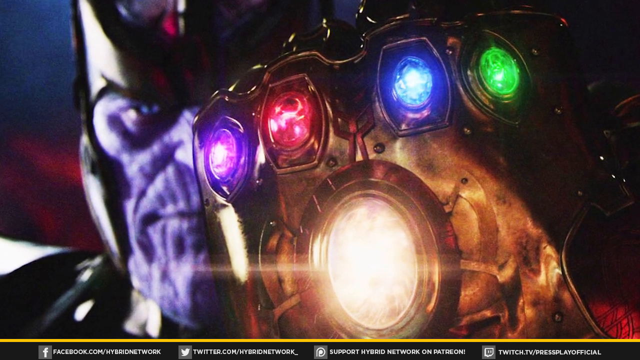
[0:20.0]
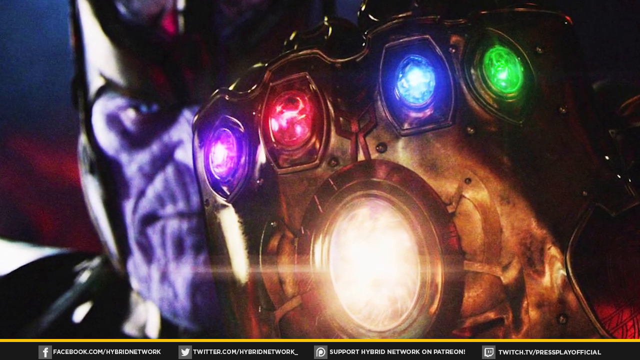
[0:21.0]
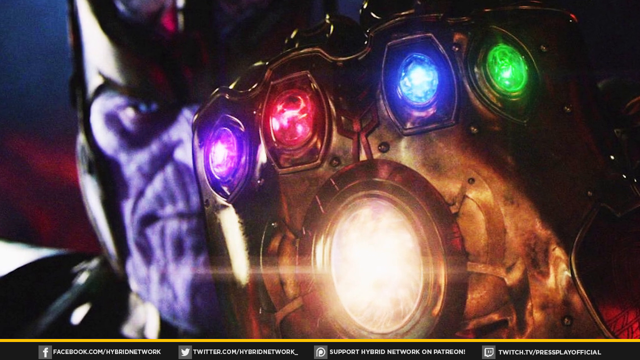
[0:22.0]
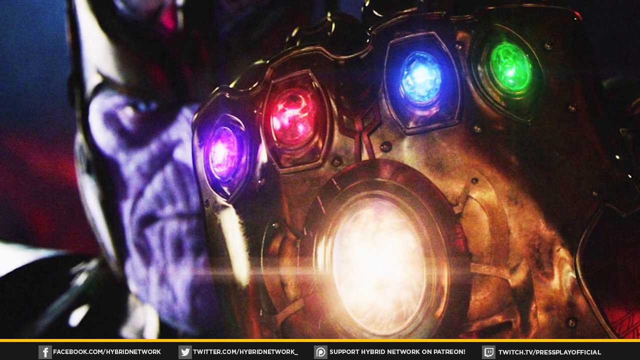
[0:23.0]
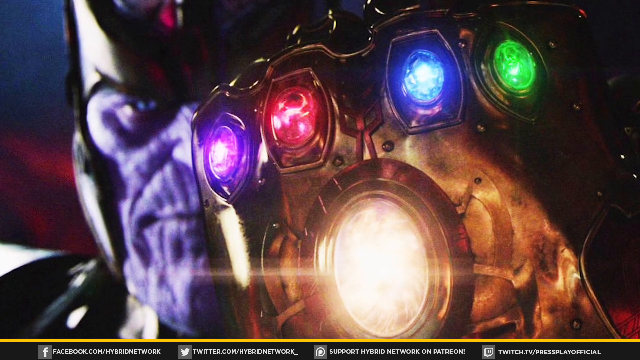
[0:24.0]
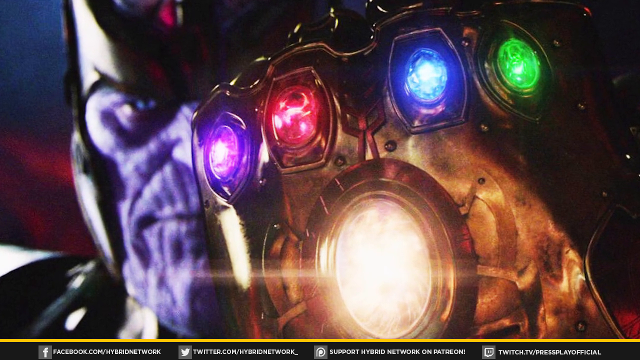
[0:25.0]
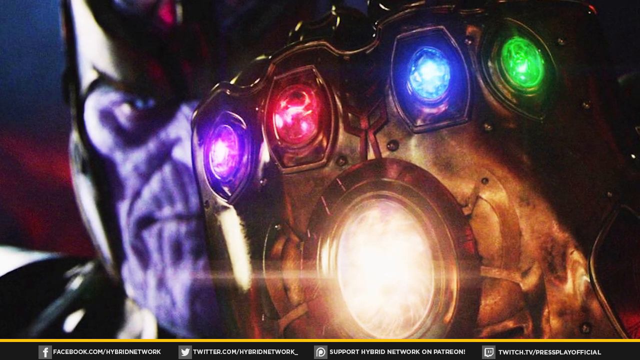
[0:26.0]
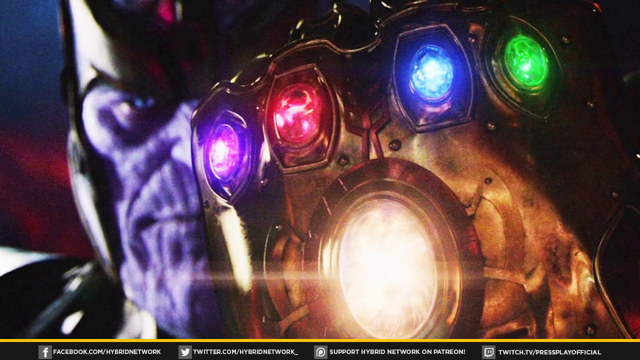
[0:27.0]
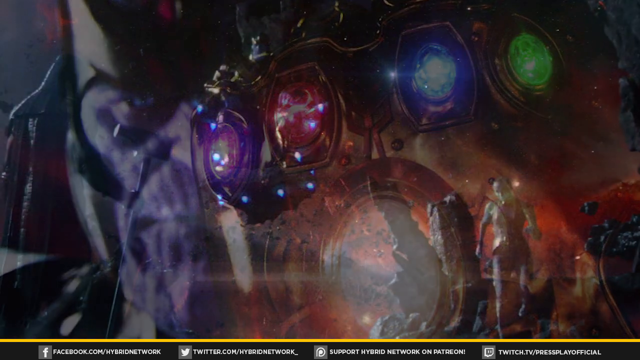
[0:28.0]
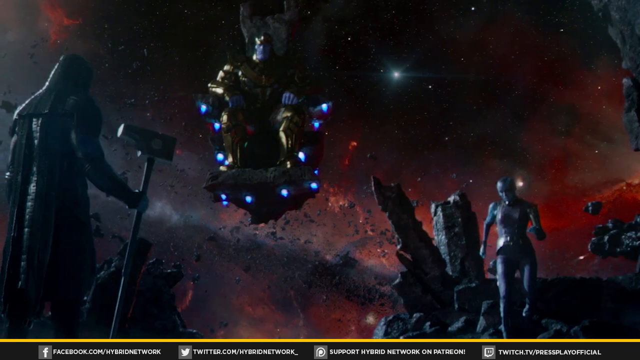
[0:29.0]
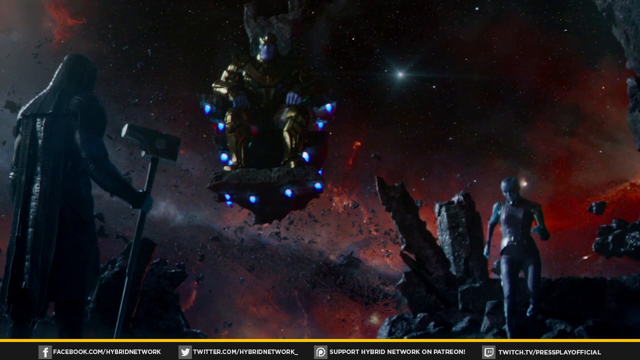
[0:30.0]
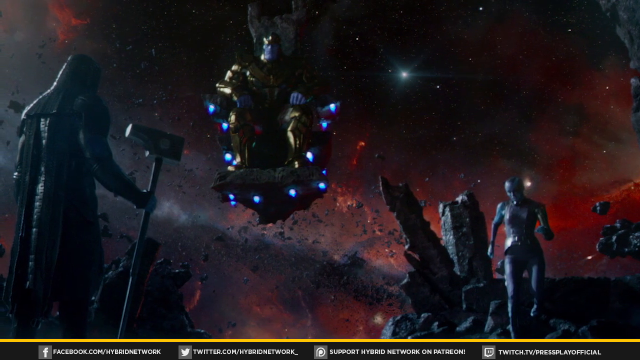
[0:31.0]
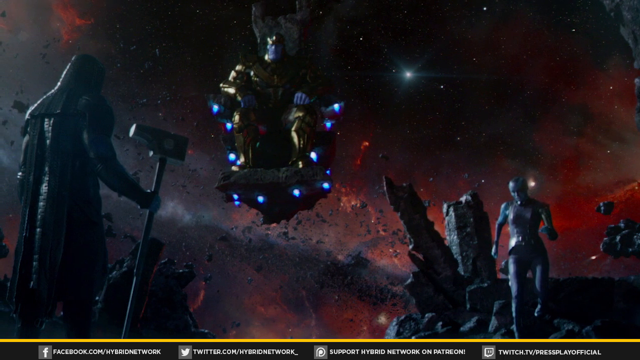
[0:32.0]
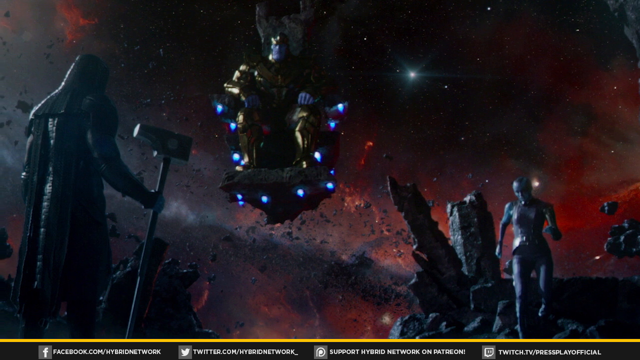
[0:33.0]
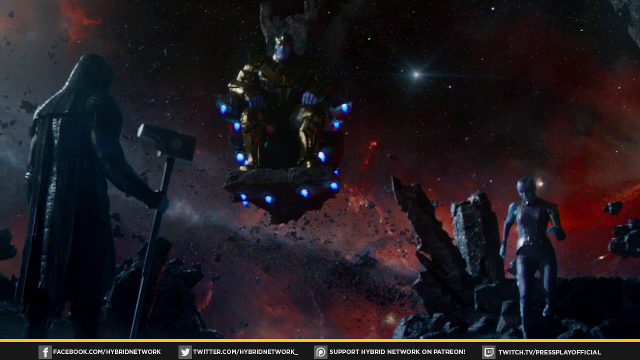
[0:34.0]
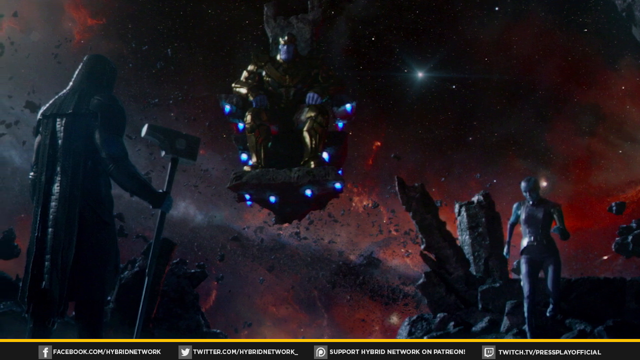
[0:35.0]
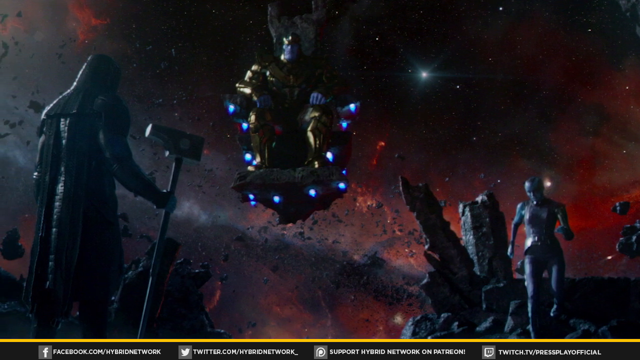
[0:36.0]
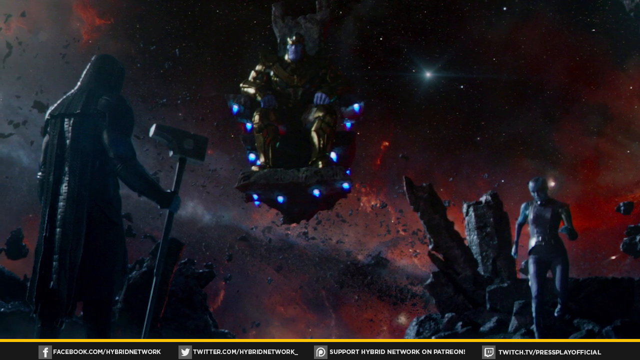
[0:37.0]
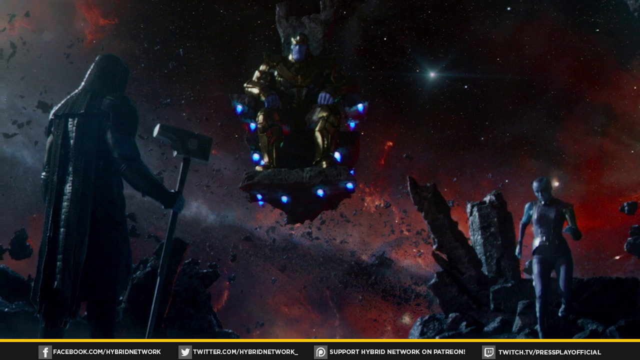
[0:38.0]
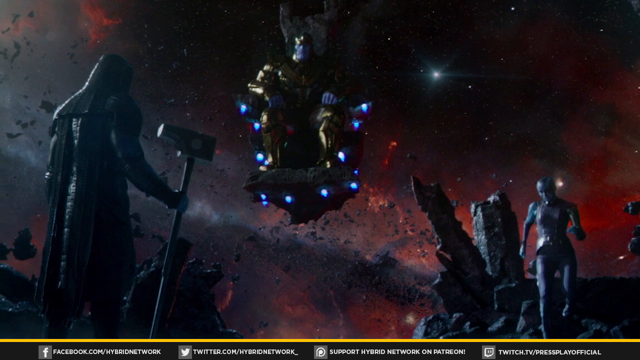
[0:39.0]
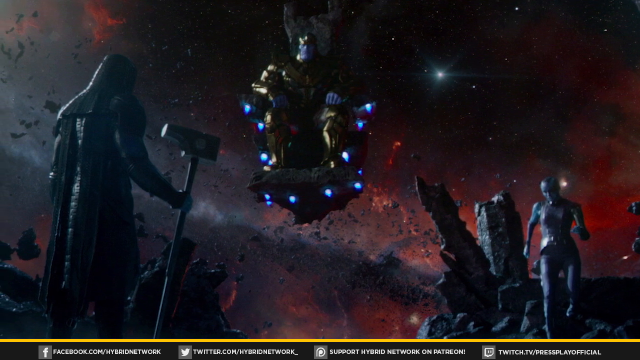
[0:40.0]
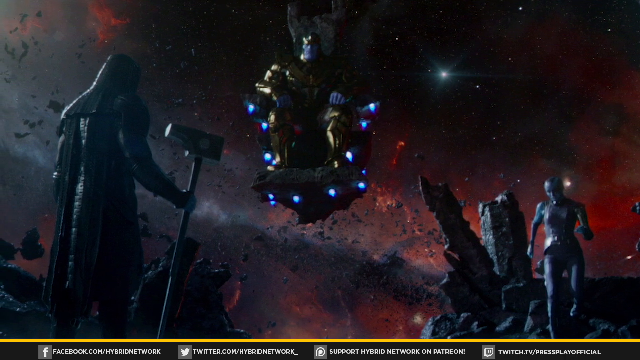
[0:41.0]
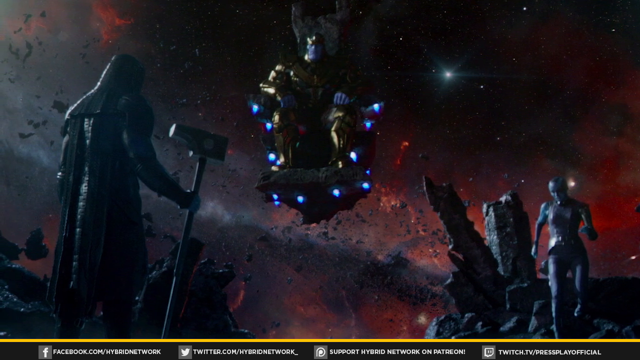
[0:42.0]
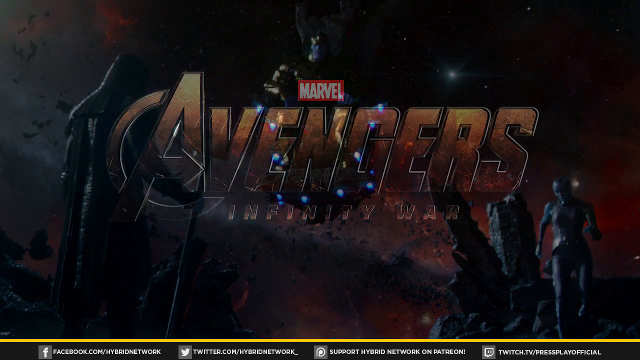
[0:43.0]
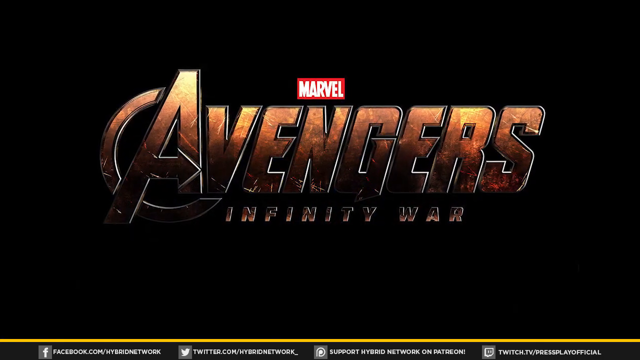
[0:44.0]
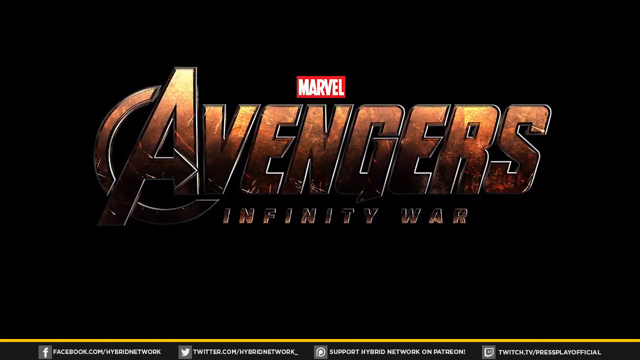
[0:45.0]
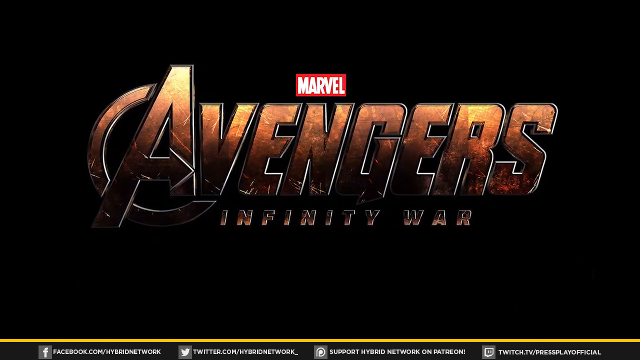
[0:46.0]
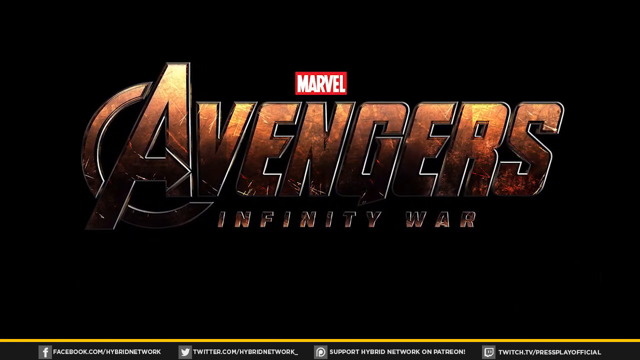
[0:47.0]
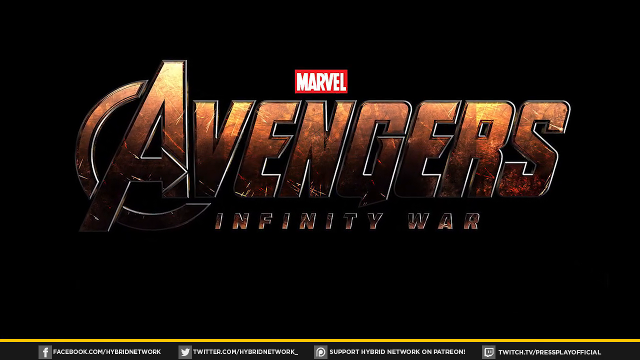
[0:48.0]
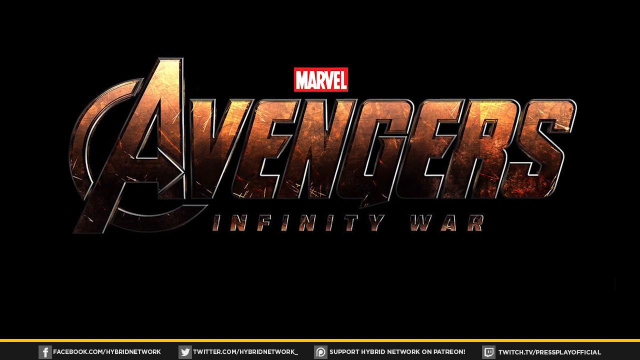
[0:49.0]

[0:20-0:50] The video appears to be about comic books or superhero movies. In the center of the frame is a purple, kind of monster-looking creature wearing a black helmet, with its face visible toward the left and a red and blue background behind it. Toward the right, the creature holds some sort of golden glowing device. The bottom of the device has a giant circle cut out of it, and above that, from left to right, are a purple circle, a red circle, a blue circle and a green circle. The camera pushes in subtly on the creature. A different still follows, showing superheroes apparently in a space environment. On the left, a dark-jacketed figure appears to be holding a hammer. Toward the right, a purplish creature in gold armor floats on a gray piece of rock with blue lighting on it, and further right is possibly a green-skinned creature. The space background has a glowing red tint to the sky, white stars and giant floating pieces of rock. The camera keeps focusing on this scene, and then a title card appears in the center of the frame reading "Marvel Avengers Infinity War", with "Marvel" in white and red and the rest in a goldish brown color. The camera pushes in on the title.